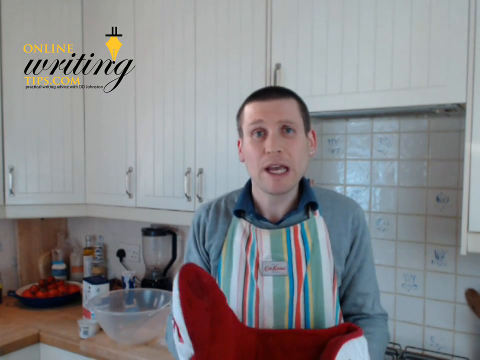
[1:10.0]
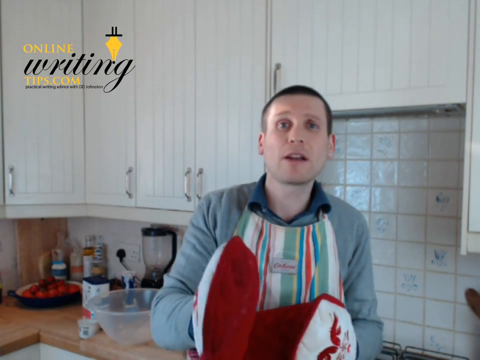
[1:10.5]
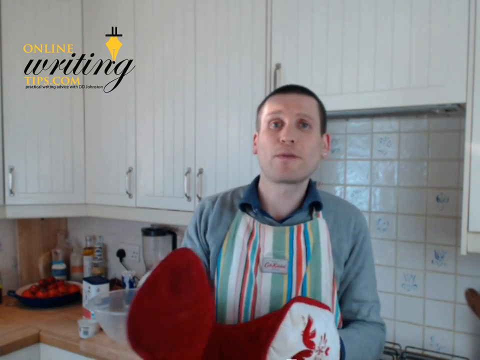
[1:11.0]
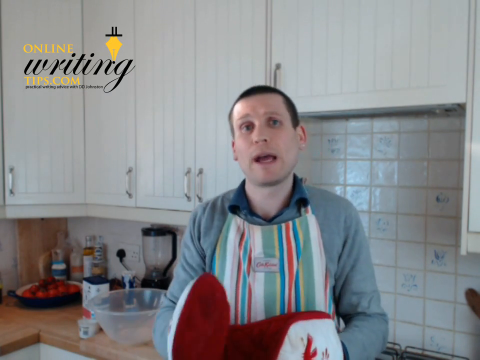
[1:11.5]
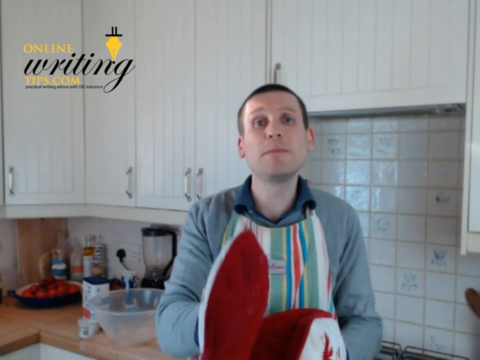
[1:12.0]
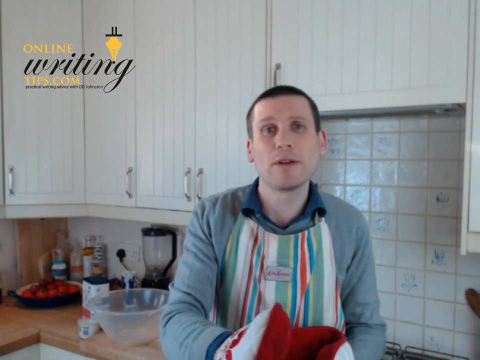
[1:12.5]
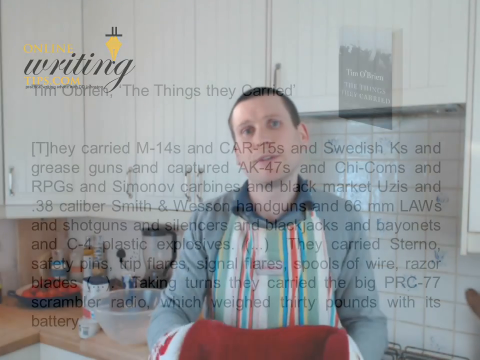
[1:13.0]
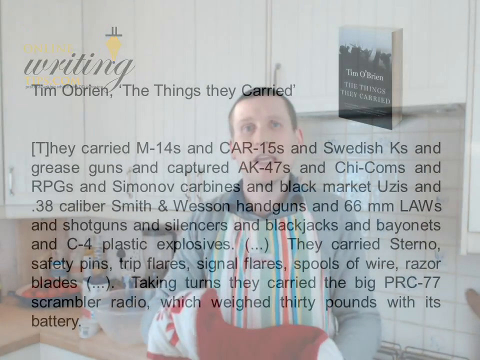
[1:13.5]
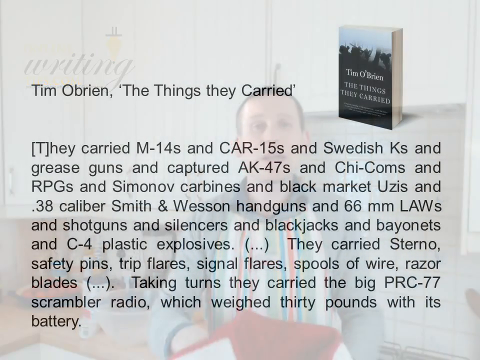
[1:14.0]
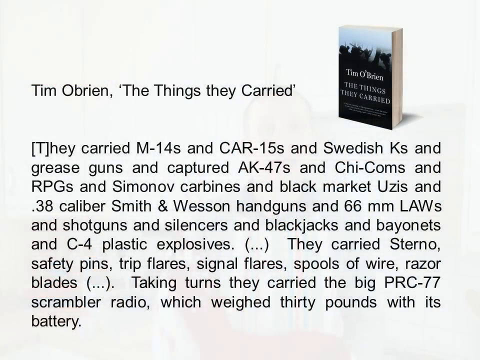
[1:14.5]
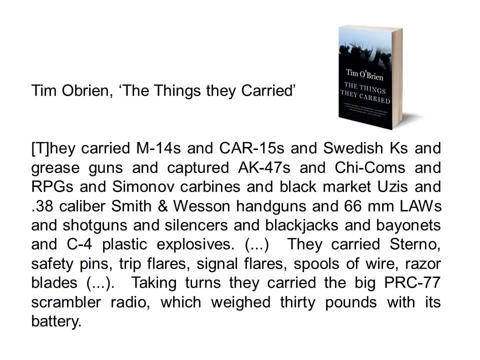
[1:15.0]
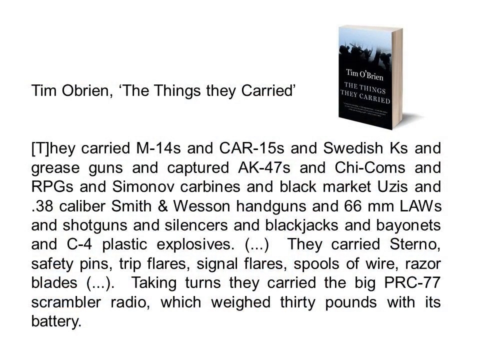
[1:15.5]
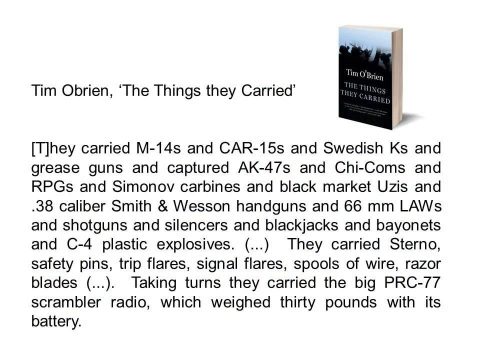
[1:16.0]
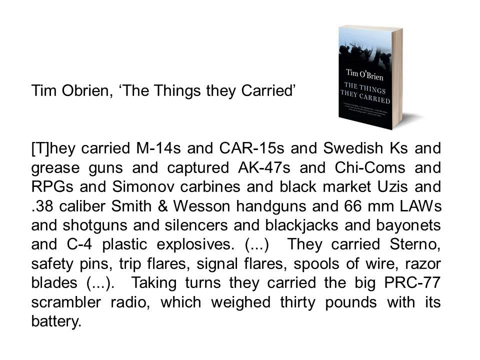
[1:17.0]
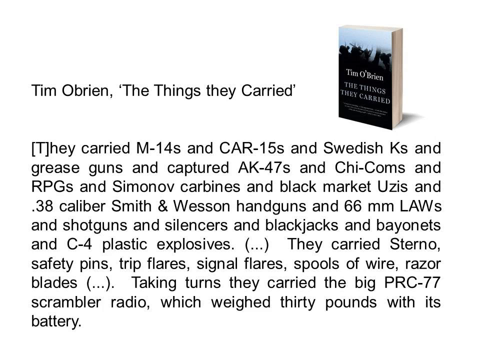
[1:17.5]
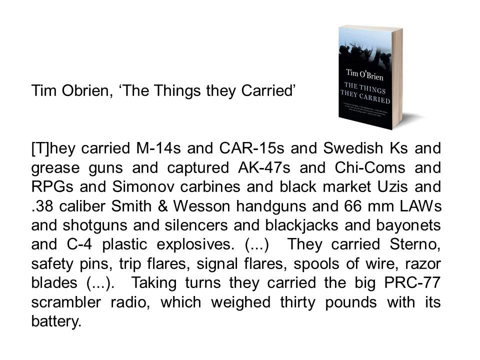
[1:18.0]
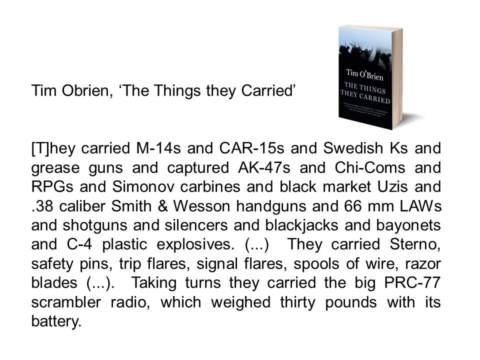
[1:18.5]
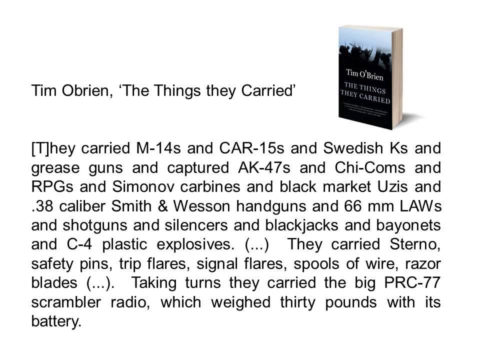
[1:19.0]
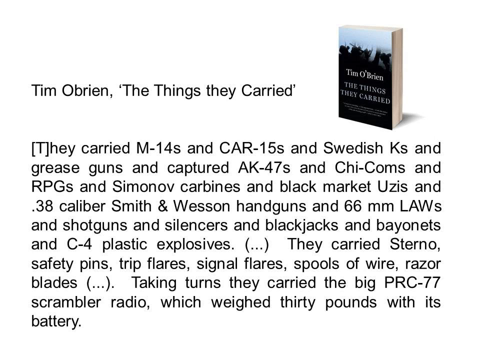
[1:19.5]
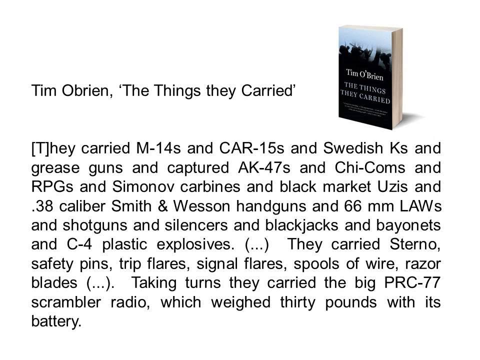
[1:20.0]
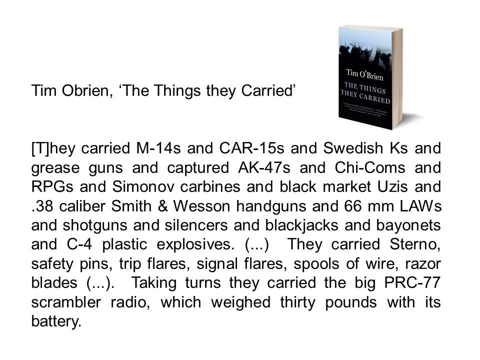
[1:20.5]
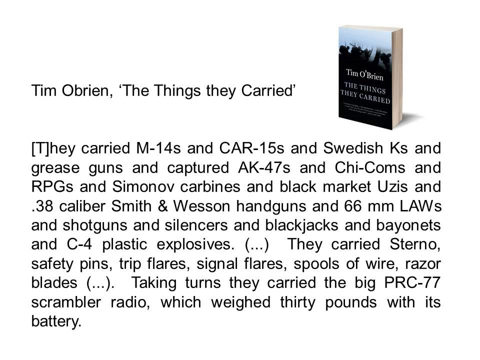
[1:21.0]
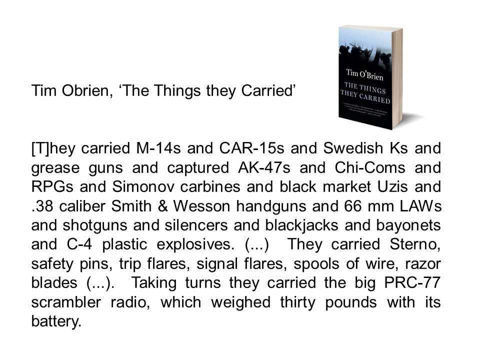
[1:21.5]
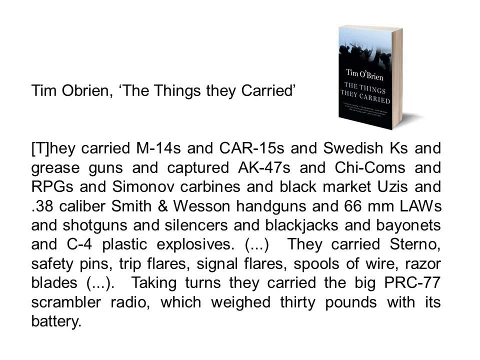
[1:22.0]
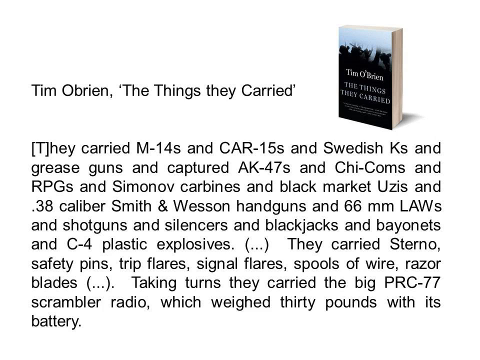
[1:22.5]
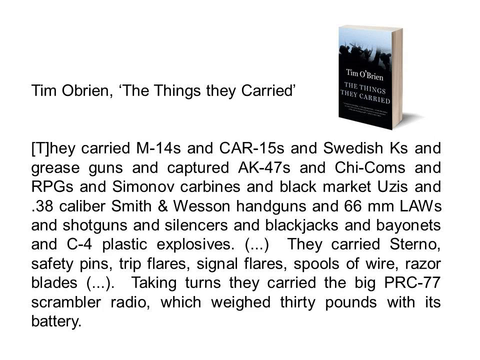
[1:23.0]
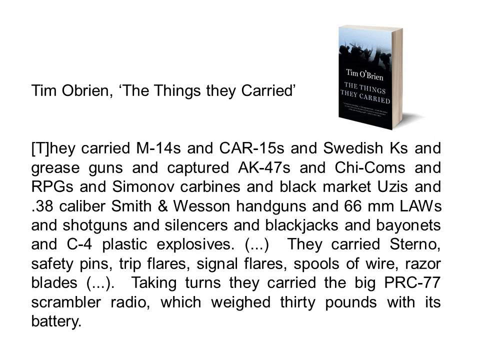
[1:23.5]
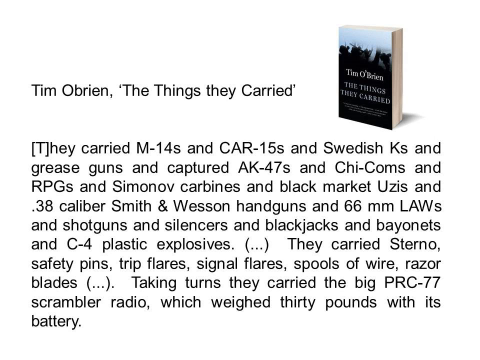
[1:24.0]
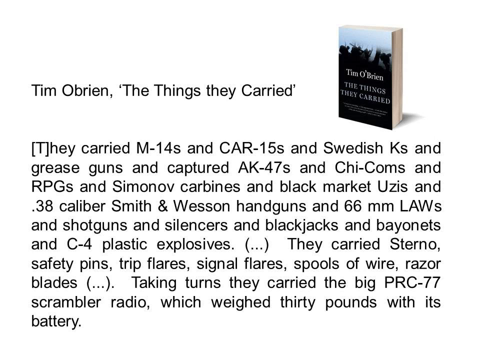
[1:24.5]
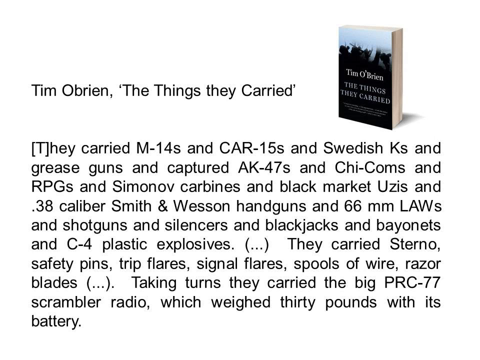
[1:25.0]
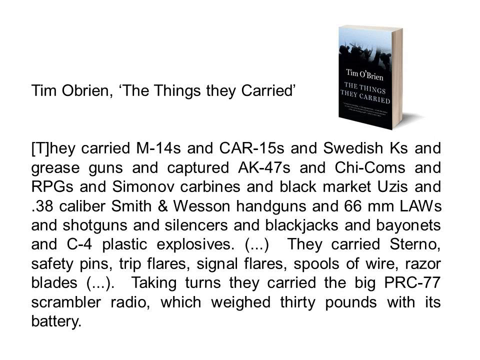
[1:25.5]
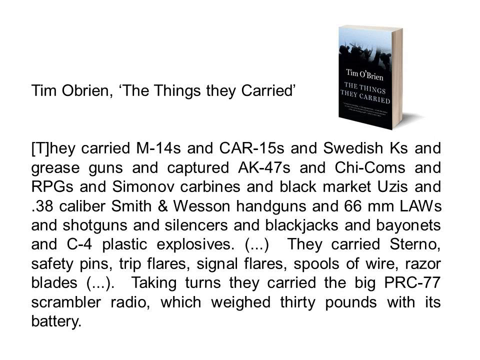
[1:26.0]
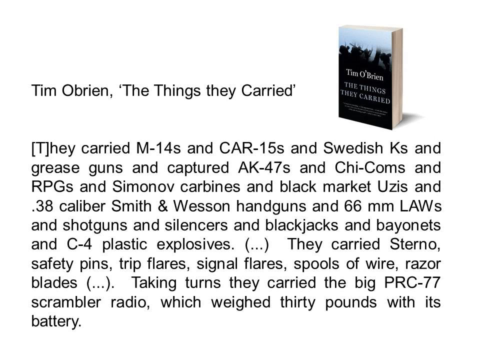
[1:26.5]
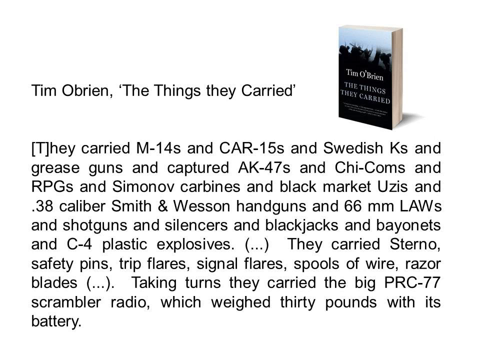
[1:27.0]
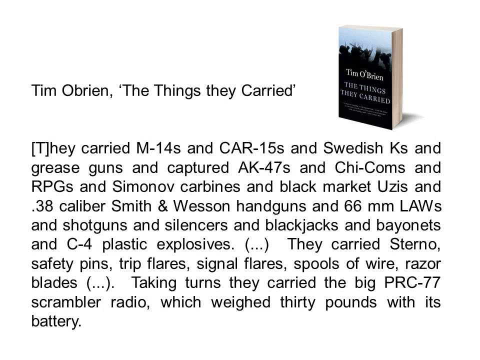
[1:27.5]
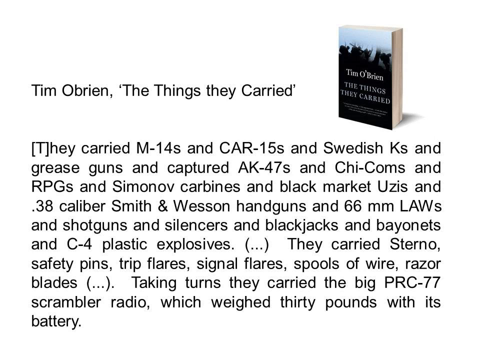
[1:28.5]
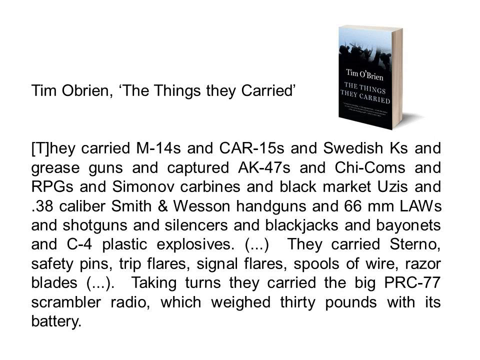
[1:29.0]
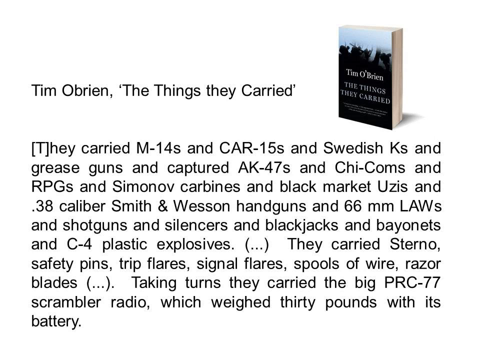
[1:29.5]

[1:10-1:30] The man in the kitchen, in the gray shirt, apron and oven mitts, keeps talking to the camera in a very animated way, moving his hands around a lot. The scene then changes to a white background with a book in the top right corner that says "Tim O'Brien"; the book is called The Things They Carried. Beside the book is listed "Tim O'Brien, The Things They Carried". Underneath is a passage that says "they carried M-14s and CAR-15s and Swedish Ks and Grease Guns and captured AK-47s and Chi-Coms and RPGs and Simonov Carbines and Black Market Uzis and .38 caliber Smith & Wesson handguns and 66 millimeter LAWS and shotguns and silencers and blackjacks and bayonets and C4 plastic explosives. They carried Sterno safety pins, trip flares, signal flares, spools of wire, razor blades. Taking turns, they carried the big PRC-77 Scrambler radio which weighed 30 pounds with its Battery".